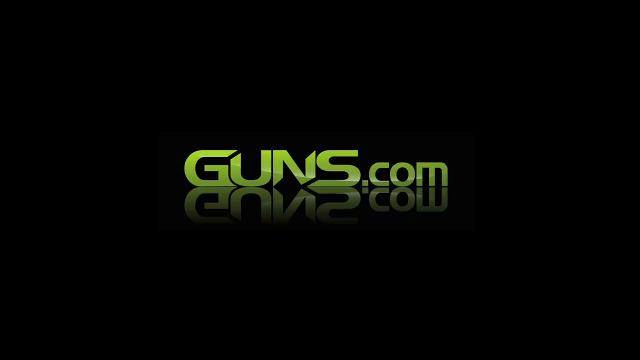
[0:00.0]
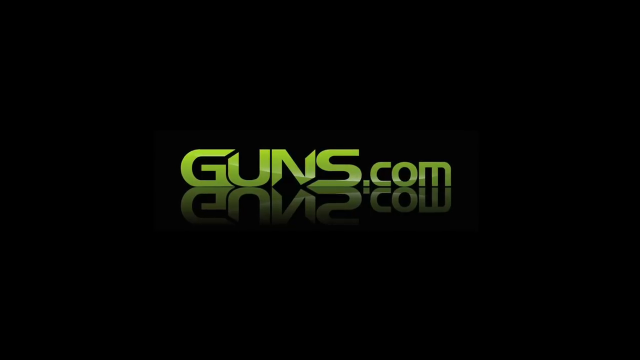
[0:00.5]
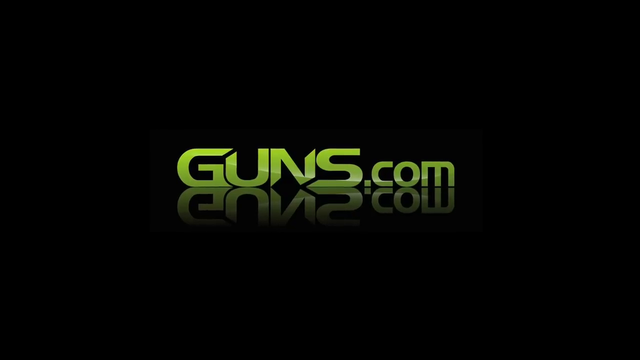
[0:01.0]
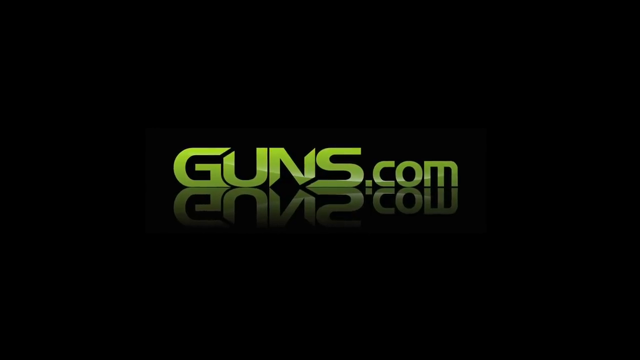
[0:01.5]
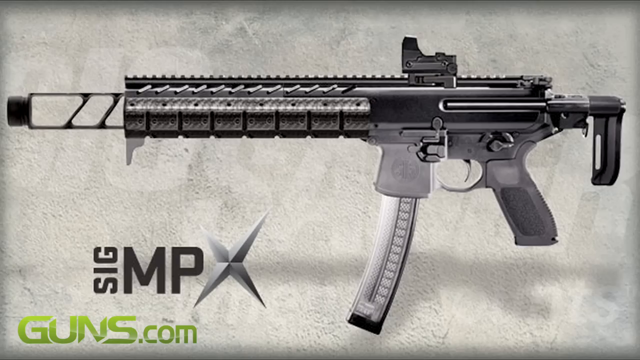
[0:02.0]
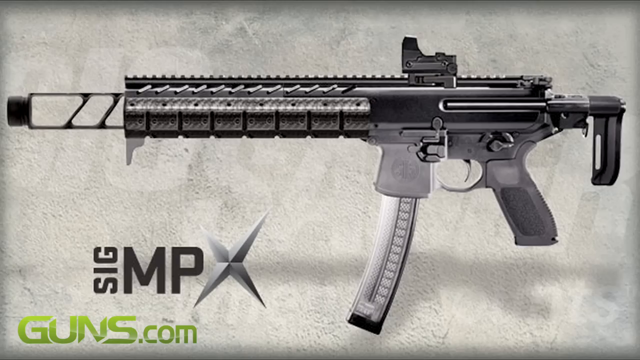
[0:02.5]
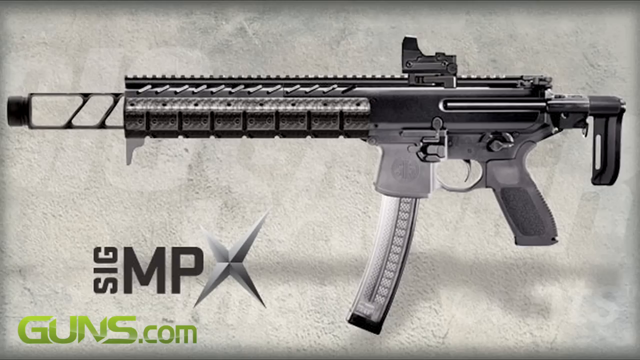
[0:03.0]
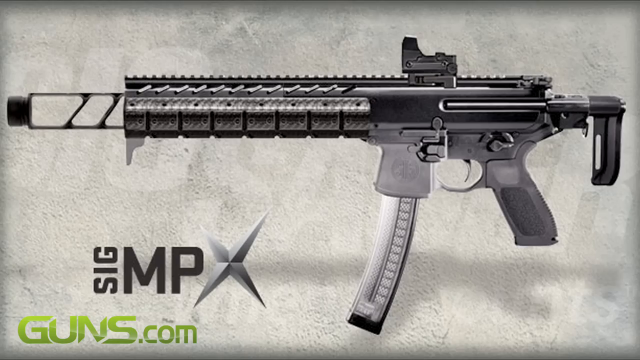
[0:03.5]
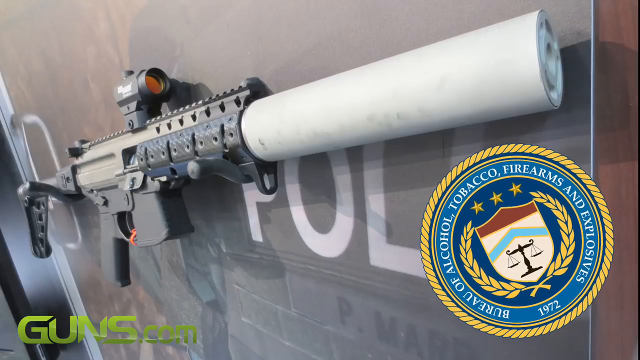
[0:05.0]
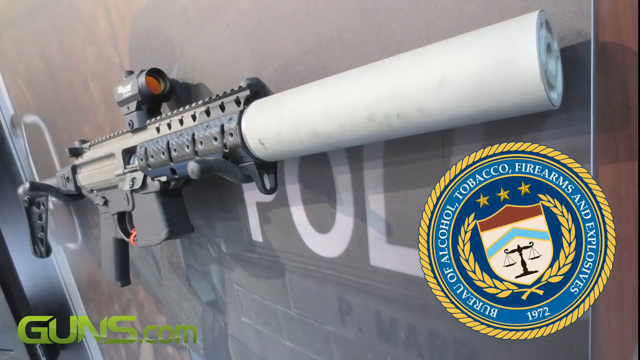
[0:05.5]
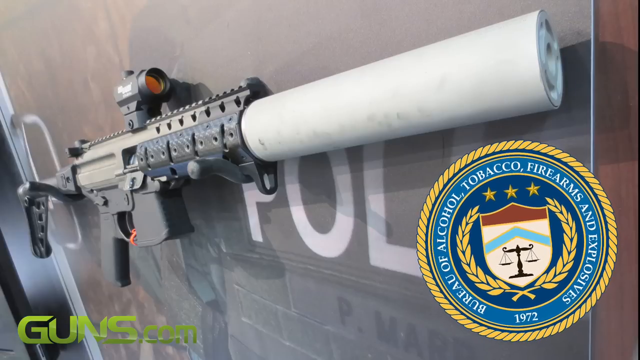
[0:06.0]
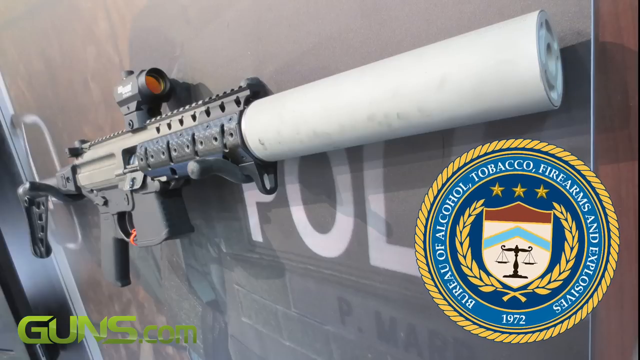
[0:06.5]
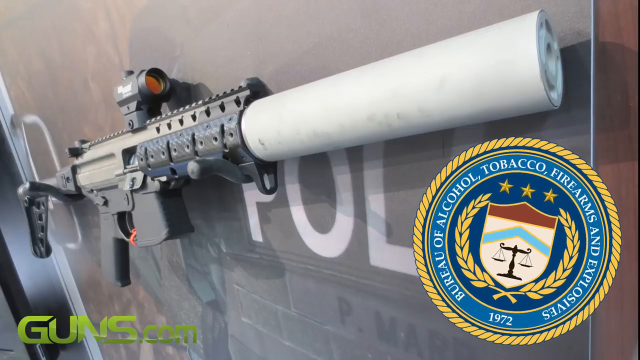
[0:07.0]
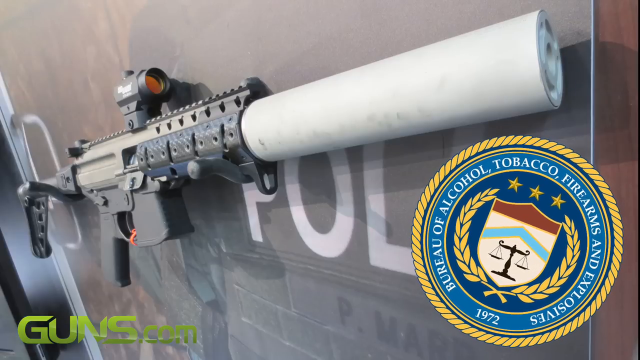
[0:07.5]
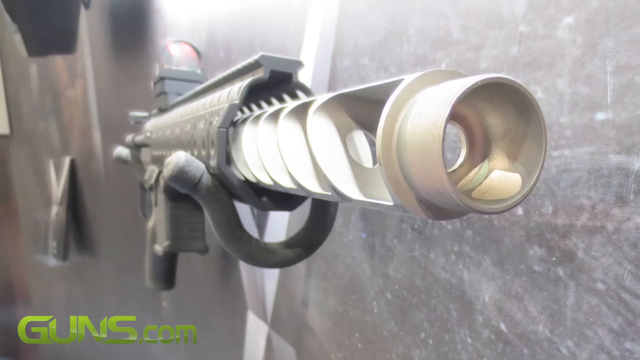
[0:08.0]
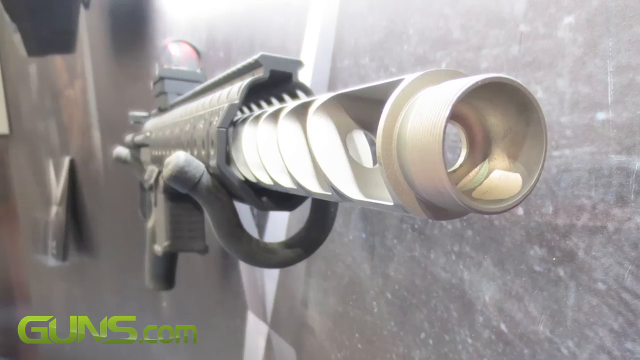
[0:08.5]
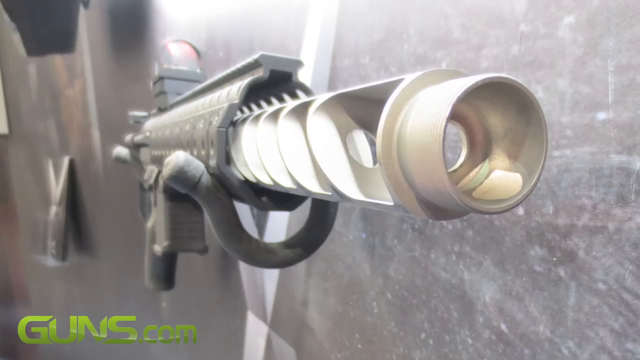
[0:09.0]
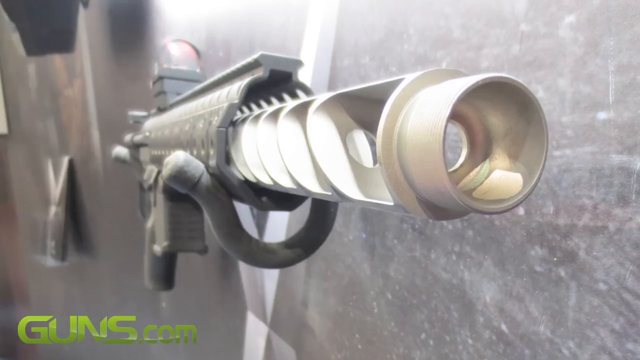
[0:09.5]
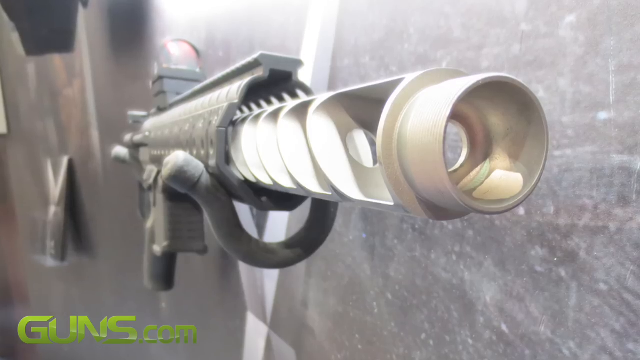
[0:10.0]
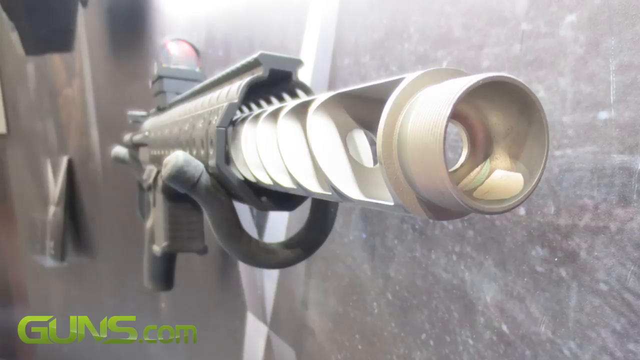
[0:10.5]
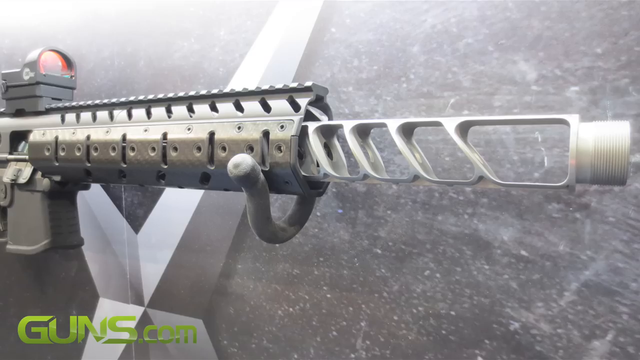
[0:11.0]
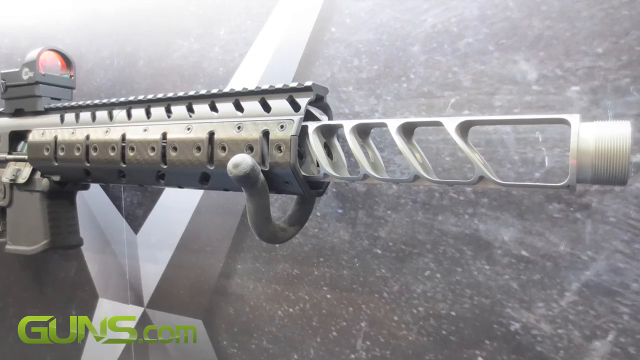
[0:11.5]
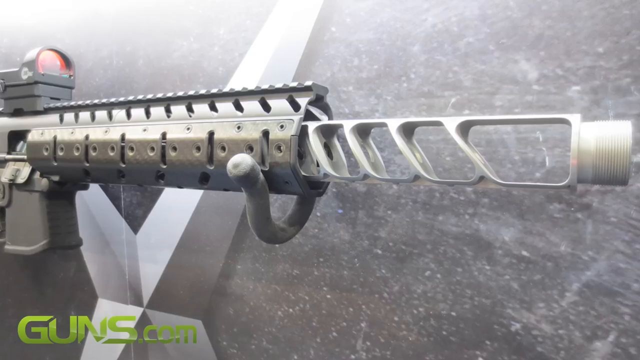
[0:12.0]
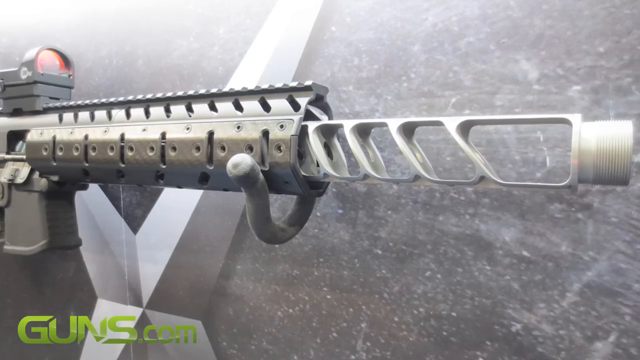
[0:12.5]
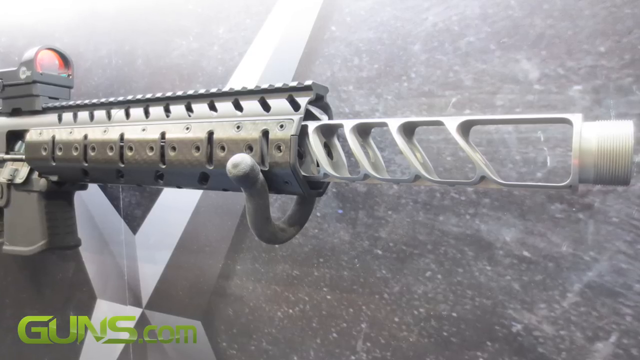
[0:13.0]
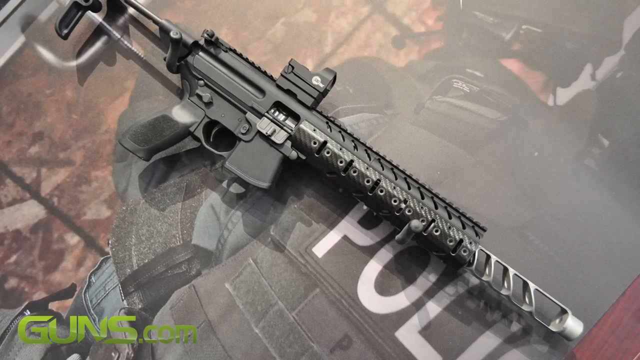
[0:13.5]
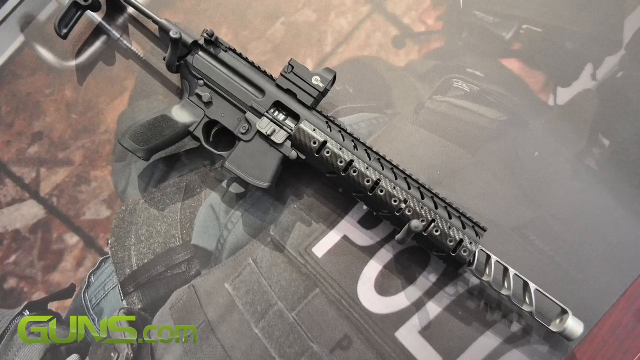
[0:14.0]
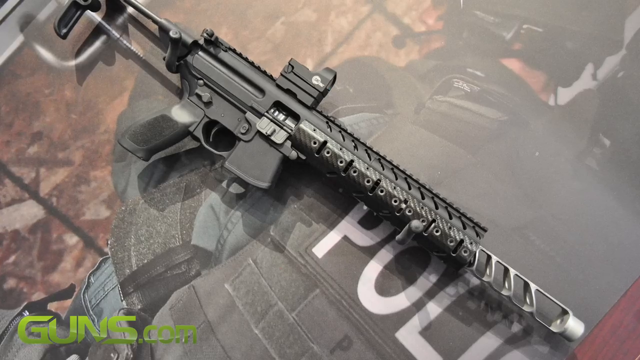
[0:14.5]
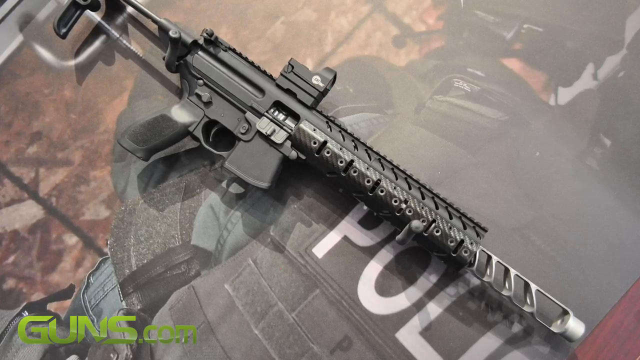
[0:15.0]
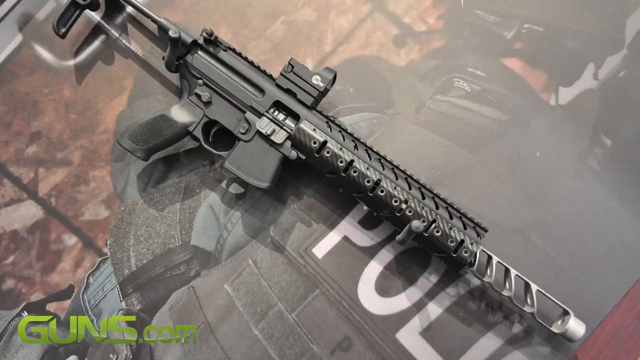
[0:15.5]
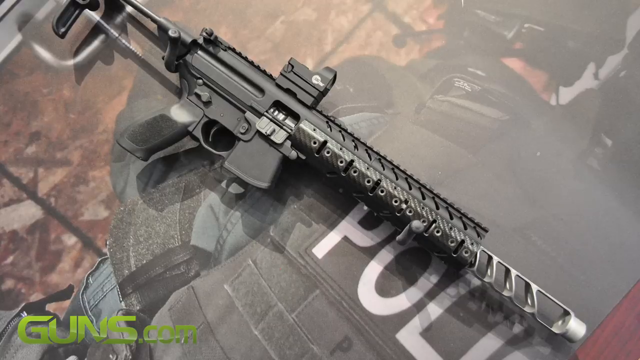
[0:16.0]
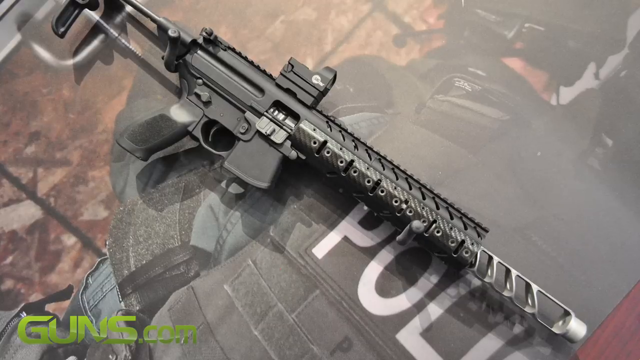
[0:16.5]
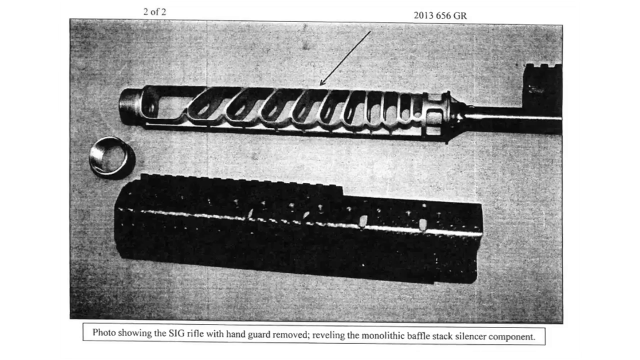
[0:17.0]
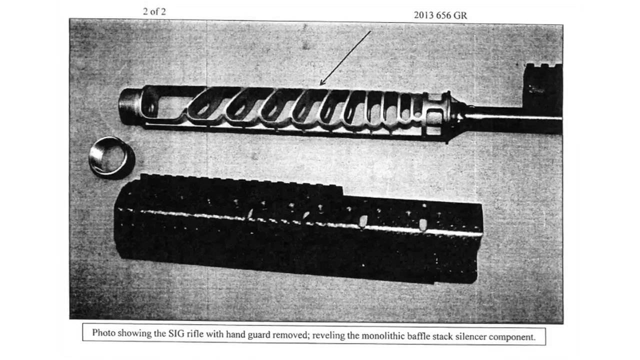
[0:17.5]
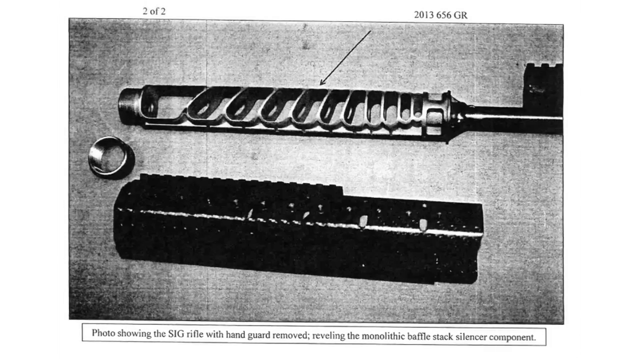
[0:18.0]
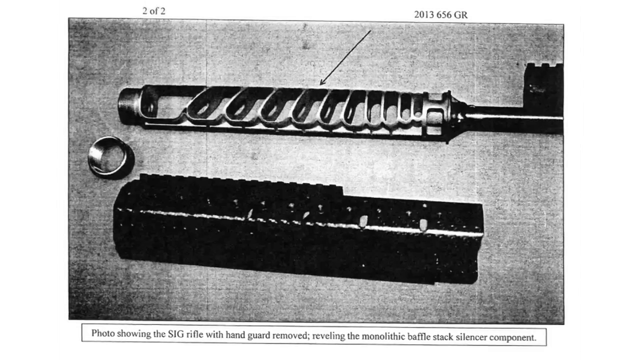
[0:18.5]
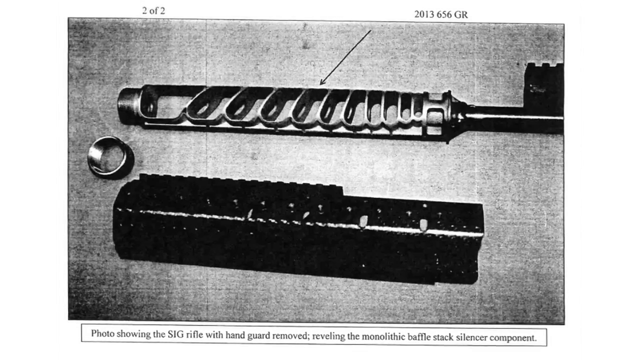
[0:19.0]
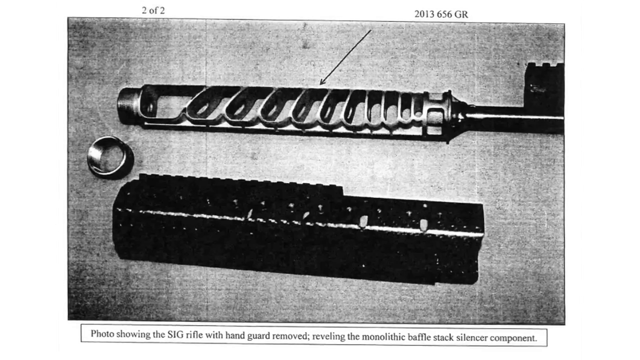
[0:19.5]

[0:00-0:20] The video opens on a black screen with a logo approaching the viewer: "Guns.com" in light green, kind of stylized. It is reflected below as though resting on some kind of reflective surface, so the word appears right side up with its reflection upside down underneath, and the logo slowly approaches on the screen. Next comes a sort of stone-colored, textured digital background with a firearm that looks like some kind of military-grade one. In the lower left, in kind of gray, it says "SIG MP", with "SIG" rotated 270 degrees so it runs upward. The firearm is all kind of black and white, with its nozzle and barrel pointing to the left and its trigger and handles on the right; it has two handles, one that looks like a pistol handle and a longer one in front of it. It looks very military-grade, and this is a still photo. The next image looks more like a photograph, with a real background, and shows another similar firearm, probably the same one, pointing the opposite direction, from left to right, and angled up toward the upper right corner. It appears to have some kind of silencer or something covering the barrel, a white tube. In the lower right, a circular logo of the Bureau of Alcohol, Tobacco, Firearms, and Explosives spins slowly clockwise. Another picture, possibly of the same weapon, shows it angled so it faces a little toward the viewer, still left to right but tilted, with the handle back and the barrel forward; the white plastic barrel over it is kind of open rather than closed. Another picture of the same one shows it looking like it is resting on a stand, left to right across the image, slowly moving toward the viewer on the screen. Another picture of one follows. These might be different firearms, but they are all similar types, like submachine guns or something, with handles and triggers that look like pistols but long, thick, heavy barrels.